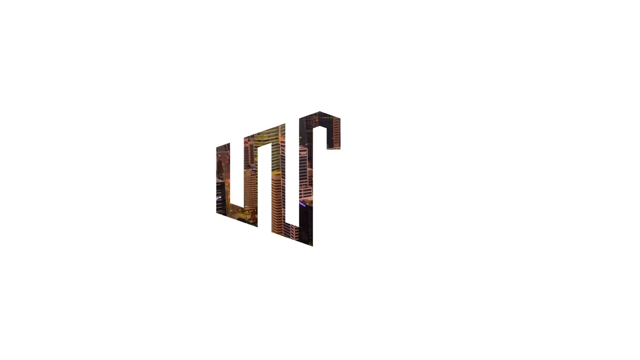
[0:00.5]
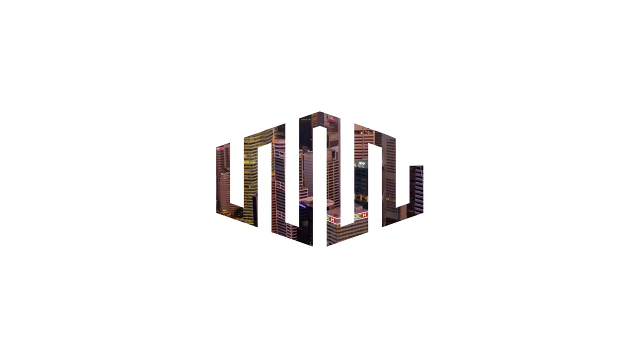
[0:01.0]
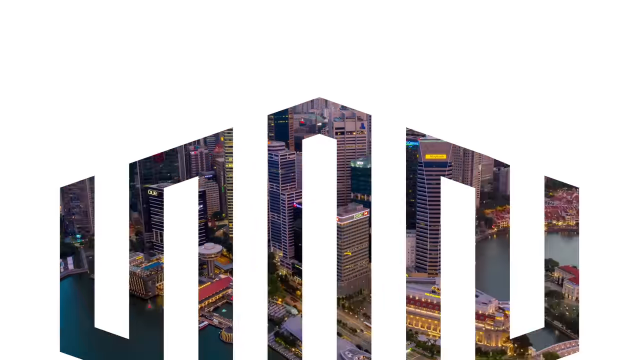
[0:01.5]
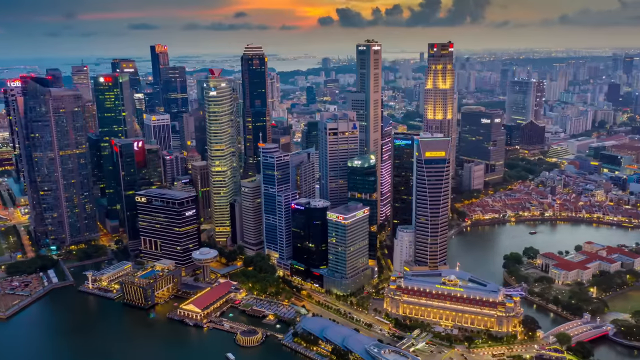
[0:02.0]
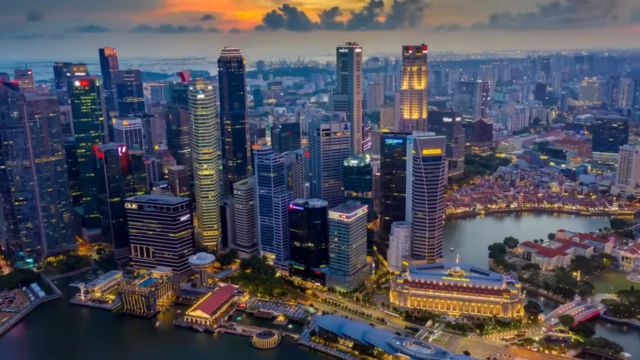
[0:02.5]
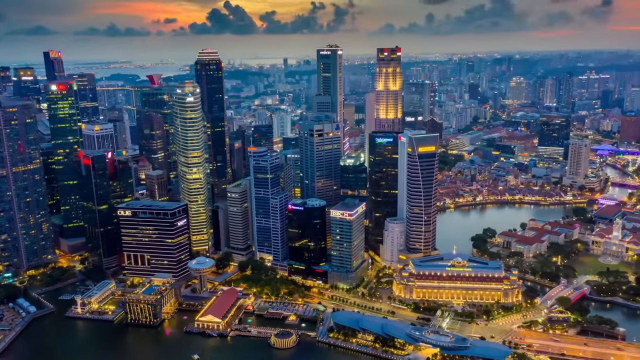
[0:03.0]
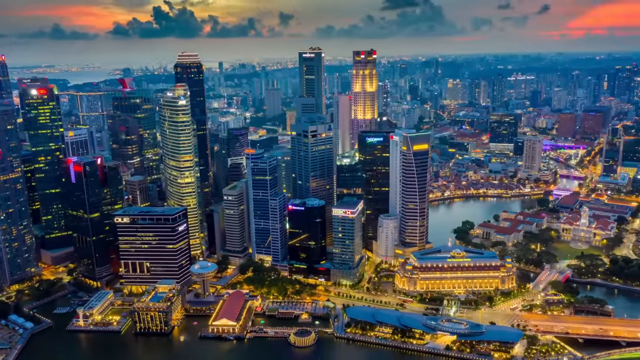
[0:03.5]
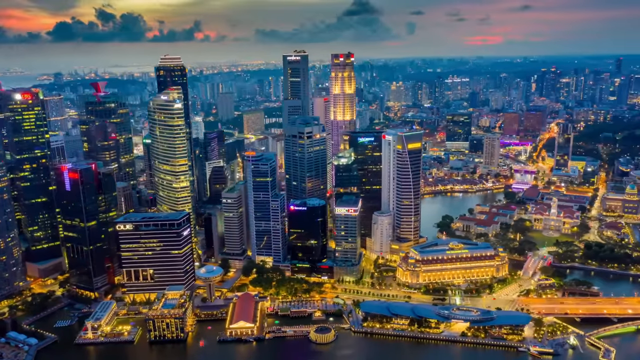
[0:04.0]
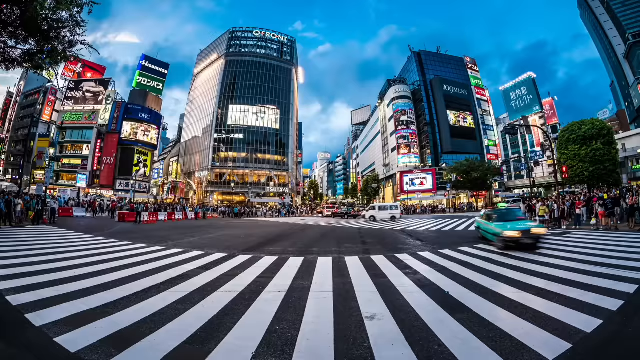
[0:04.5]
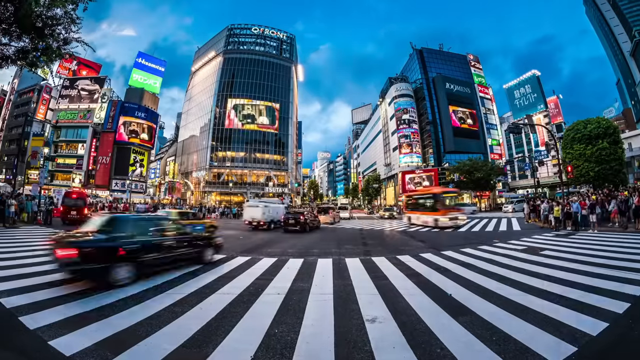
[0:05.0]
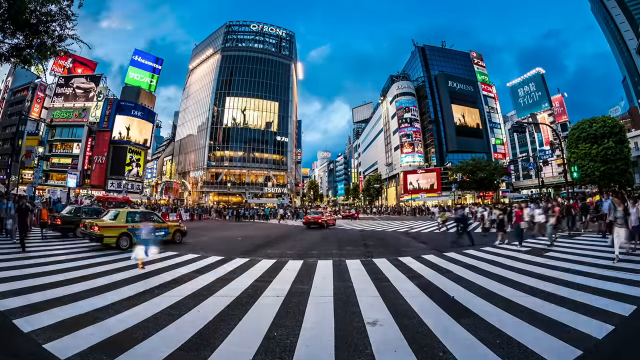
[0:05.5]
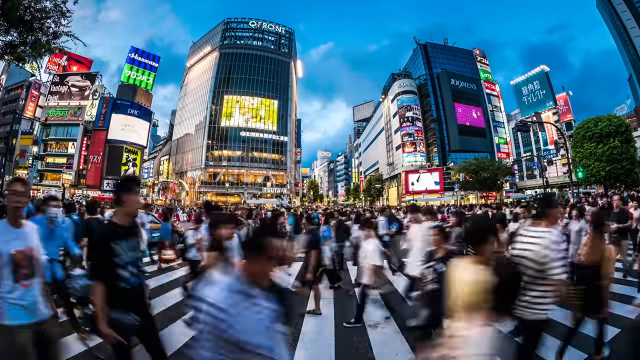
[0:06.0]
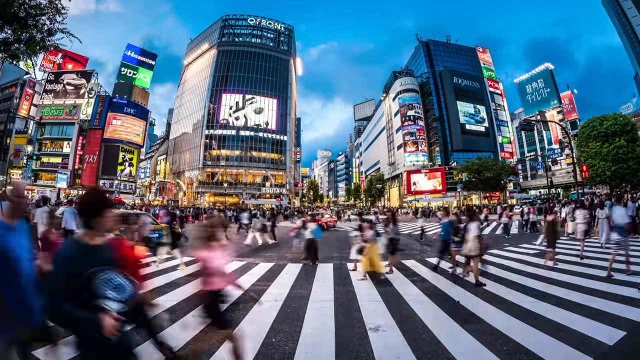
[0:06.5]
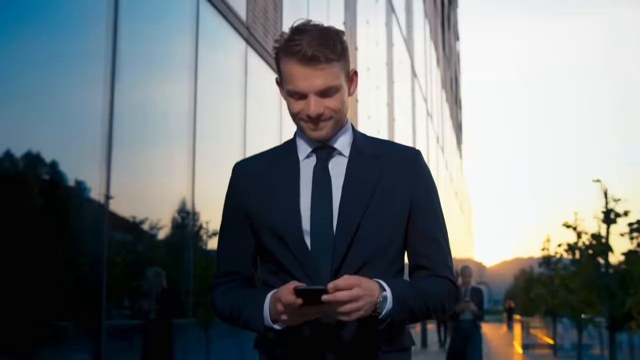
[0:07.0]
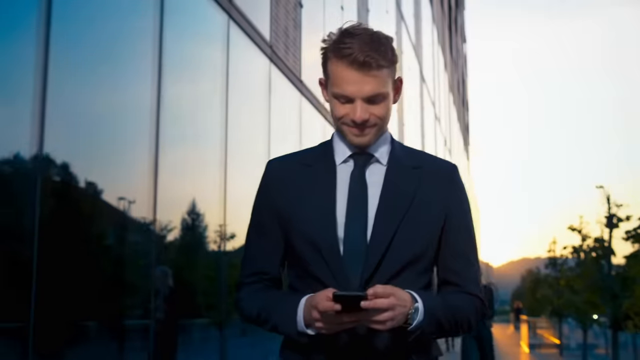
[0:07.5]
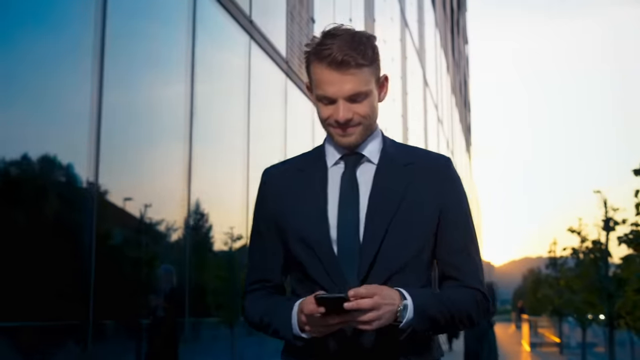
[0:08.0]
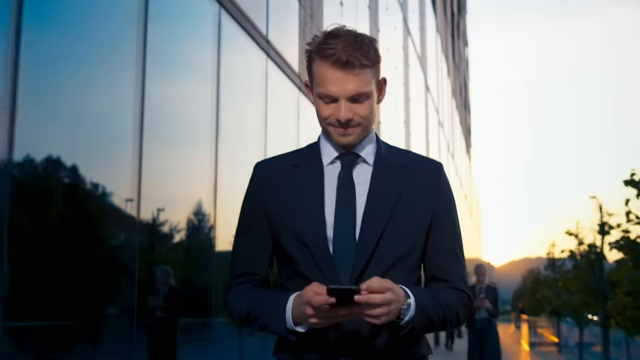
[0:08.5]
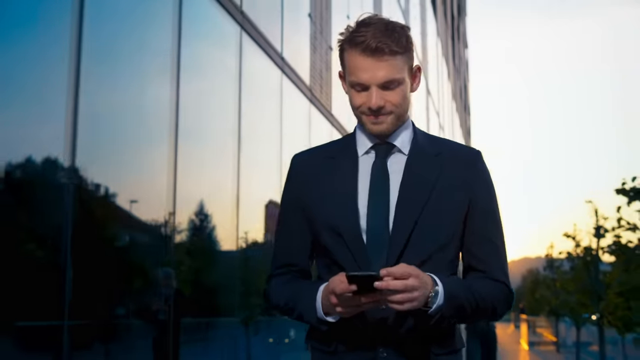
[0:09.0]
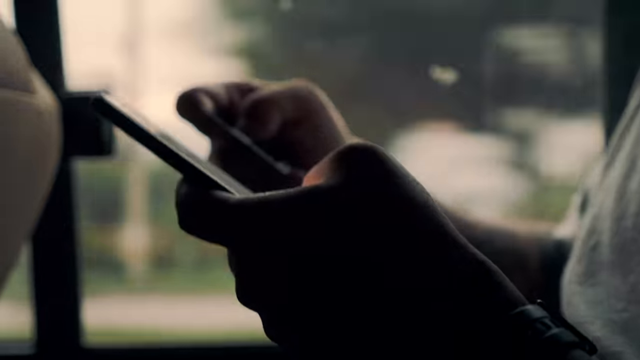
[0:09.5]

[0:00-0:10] What could be a computer-generated, possibly AI-generated city appears, with buildings, a dark blue, cloudy sky and people; the sunlight suggests either morning or evening. It looks almost like New York, with skyscrapers in the center and endless buildings. A man in a dark blue suit and blue tie walks down a sunny street. A graphic reads something like "WNW". Fast-moving people appear in sped-up footage.